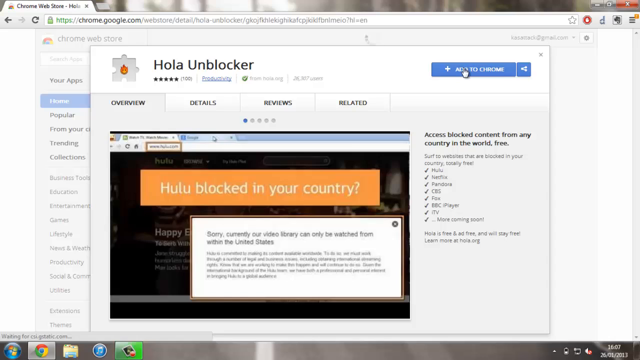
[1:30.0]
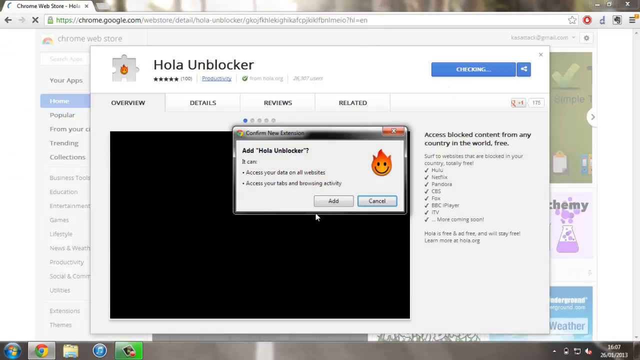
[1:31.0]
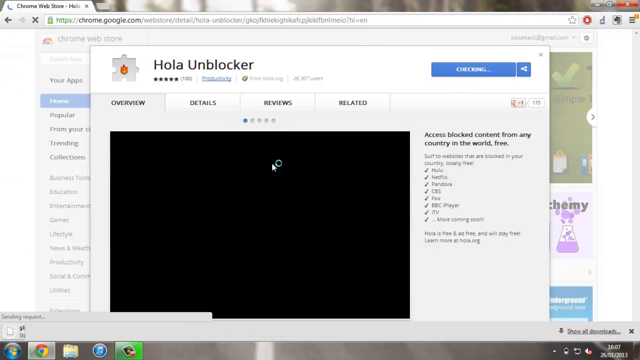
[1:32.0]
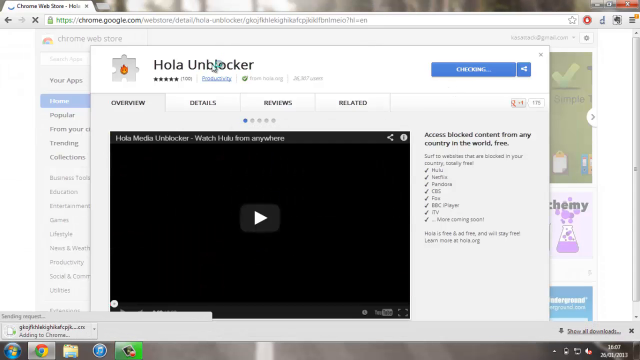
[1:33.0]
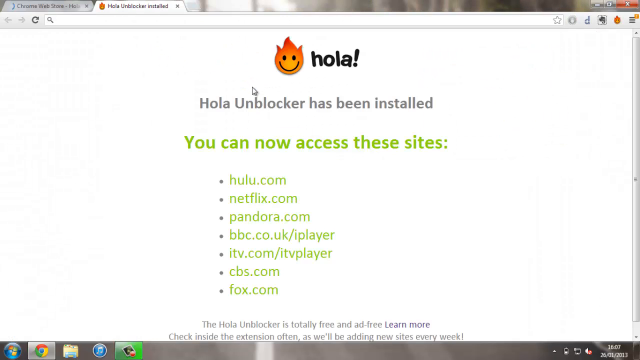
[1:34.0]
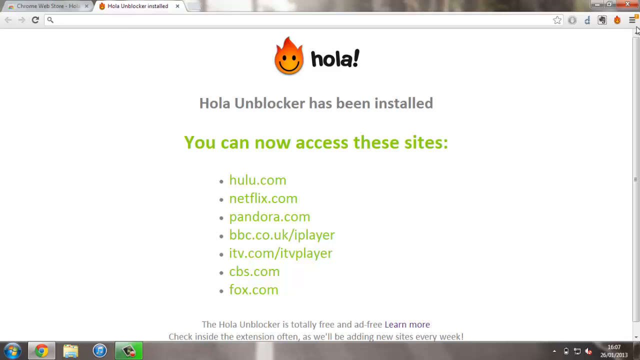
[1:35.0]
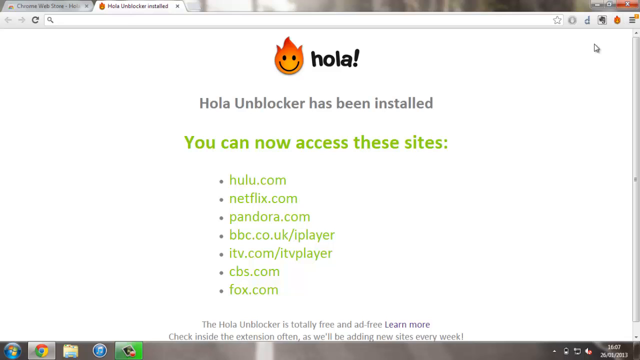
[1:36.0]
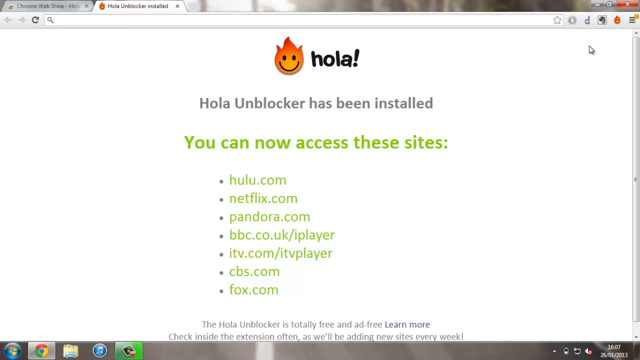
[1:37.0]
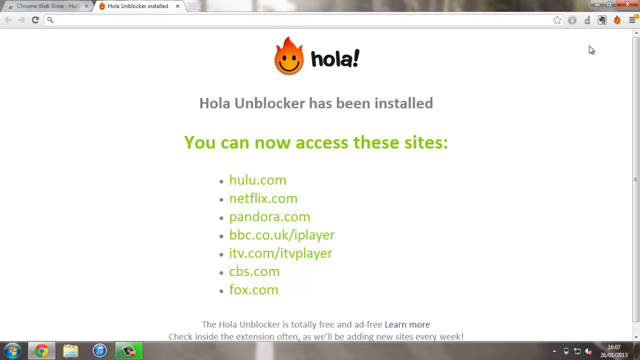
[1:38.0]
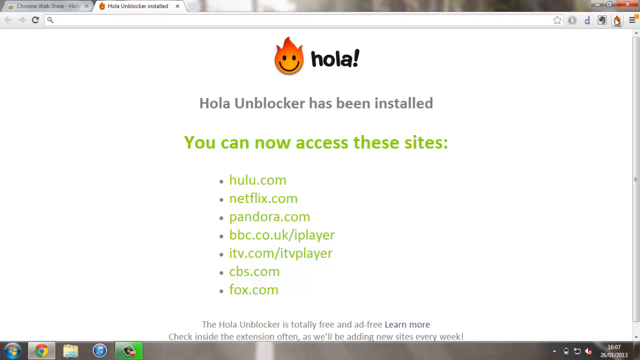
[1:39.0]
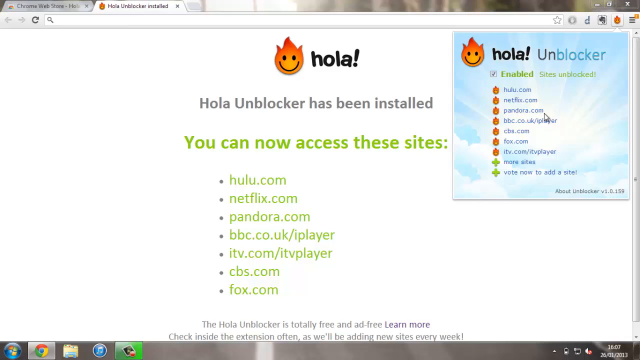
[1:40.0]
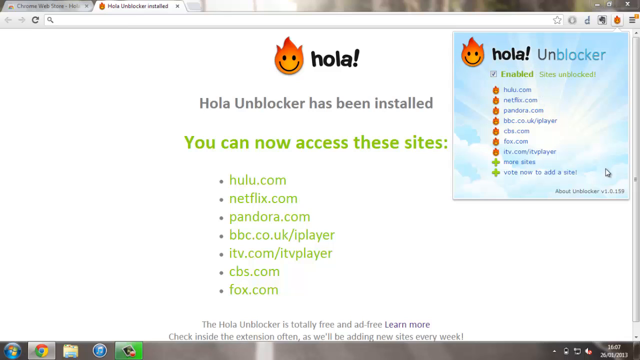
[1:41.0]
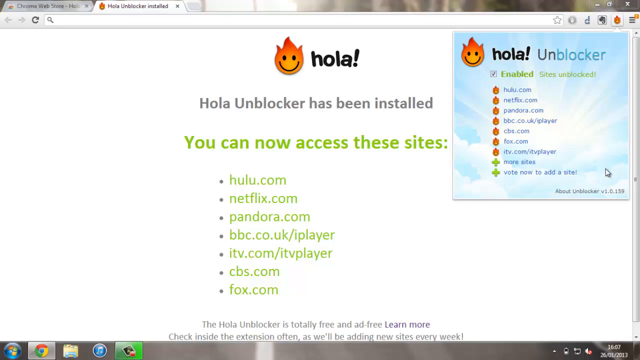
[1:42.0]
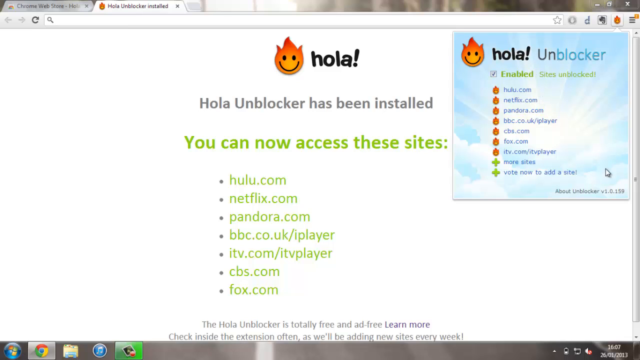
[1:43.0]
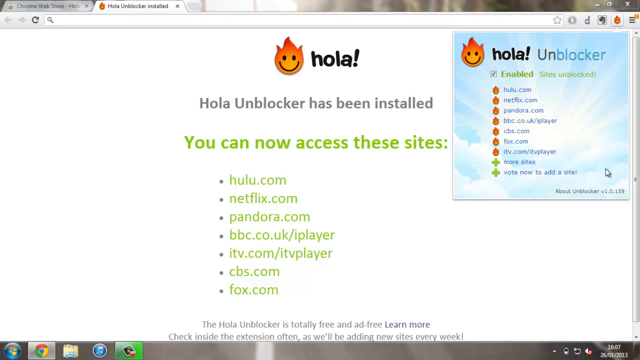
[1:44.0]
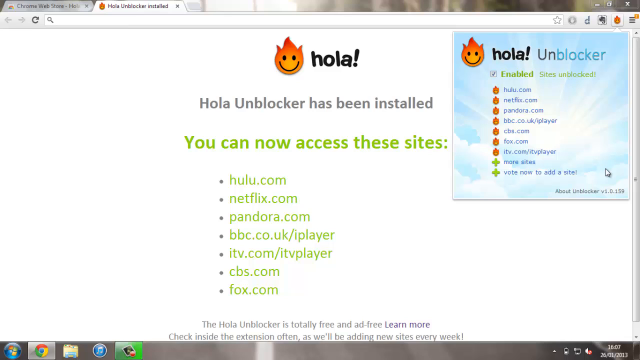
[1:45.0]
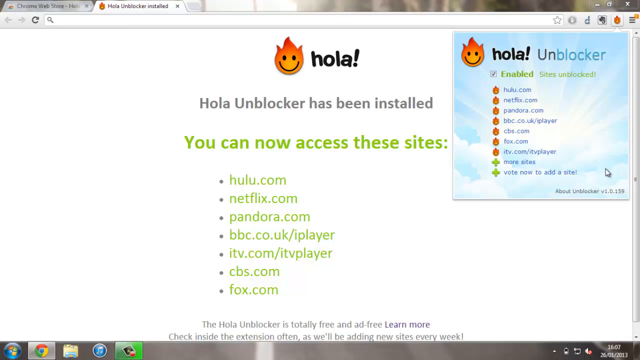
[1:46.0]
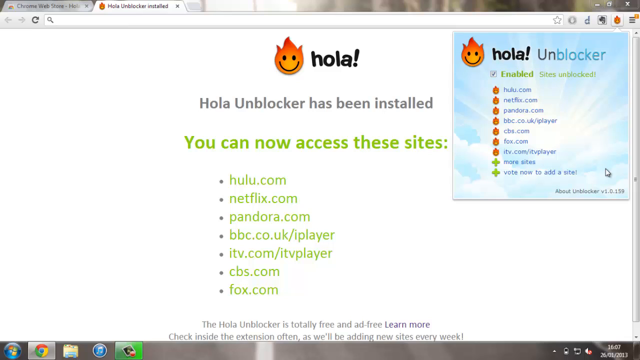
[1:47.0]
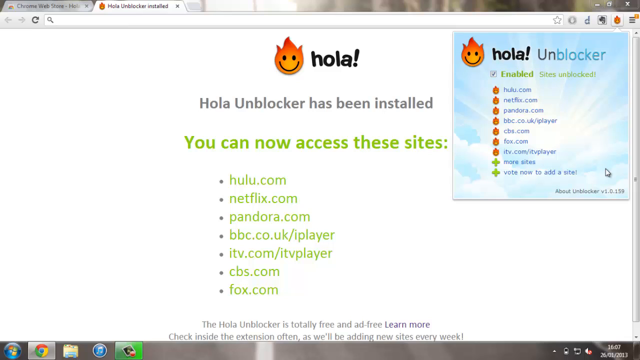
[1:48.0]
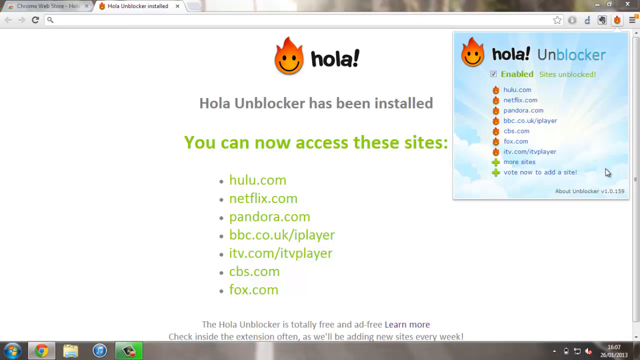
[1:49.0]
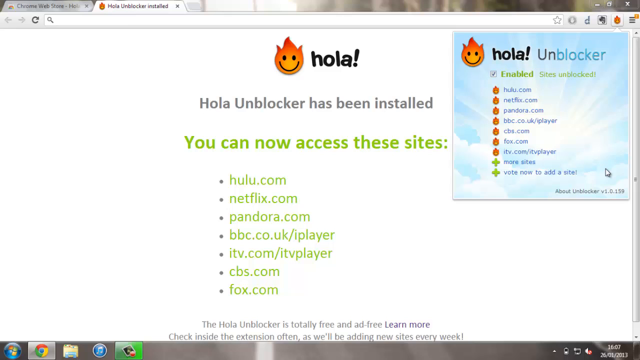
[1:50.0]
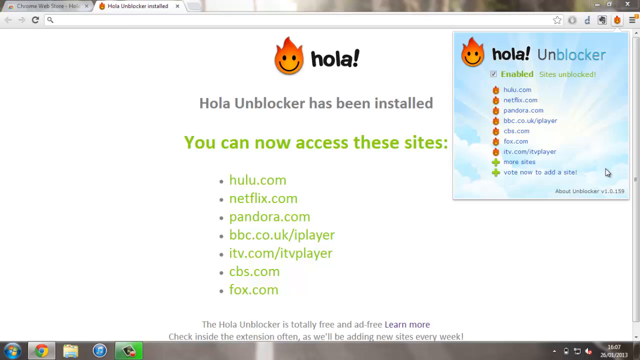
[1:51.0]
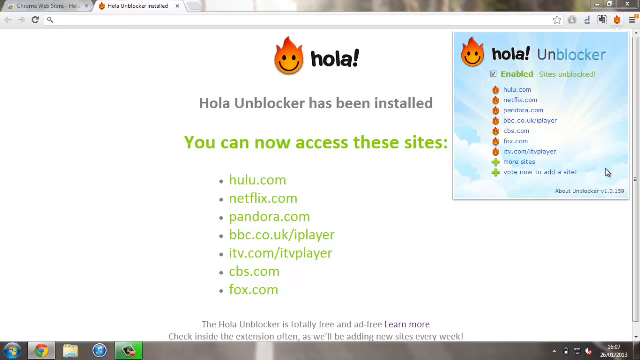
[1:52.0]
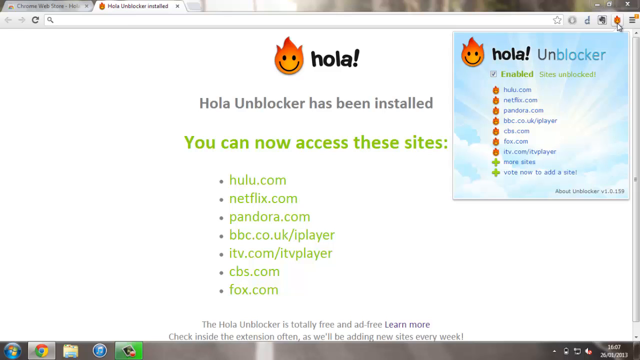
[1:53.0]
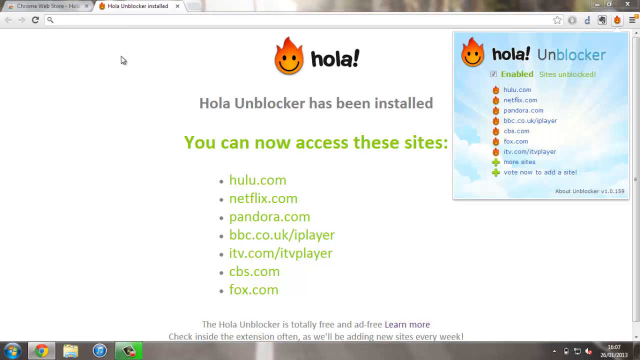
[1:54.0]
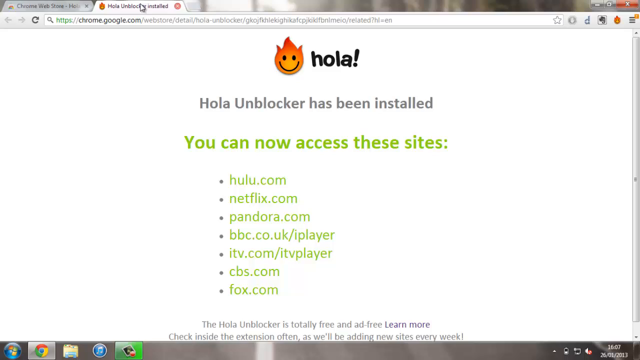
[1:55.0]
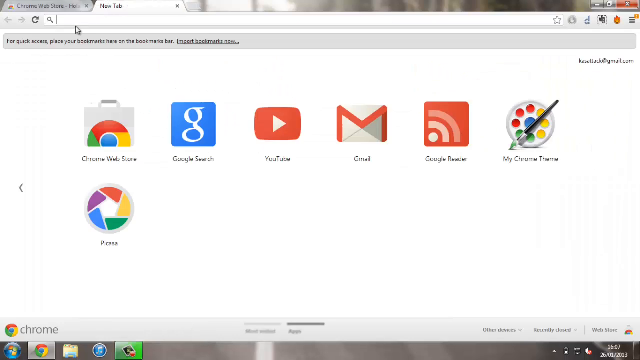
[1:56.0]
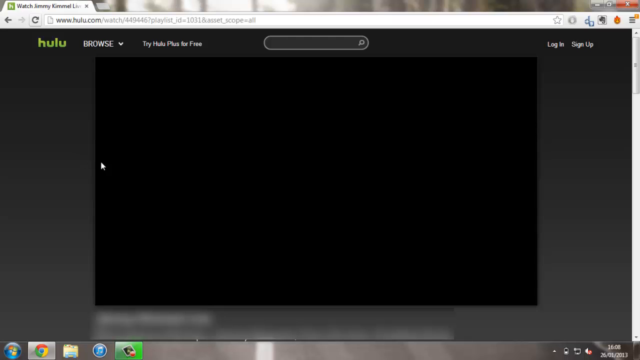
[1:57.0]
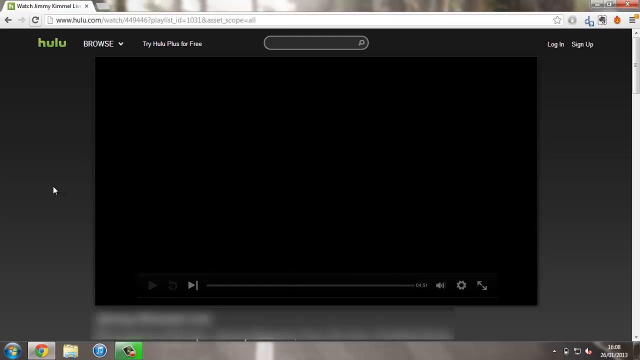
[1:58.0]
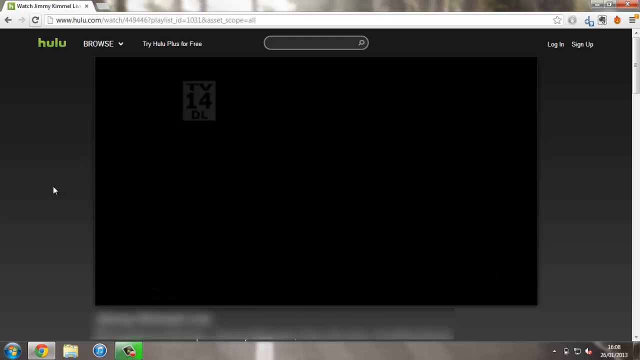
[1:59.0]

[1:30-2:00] After the Add to Chrome click, a pop-up appears asking to add Hola Unblocker and saying "It can access your data on all websites, access your tabs and browsing activity". The user clicks Add without hesitating. It quickly loads, something pops up in the top right, and a new tab opens saying "Hola Unblocker has been installed. You can now access these sites", listing hulu.com, netflix.com, pandora.com, bbc.co.uk iPlayer, itv.com iPlayer, cbs.com and fox.com. The user clicks the Hola icon in the top right, bringing up another pop-up titled "Hola Unblocker", with a check mark in a box next to the word "enabled" and a list of unblocked sites: Netflix, Pandora, BBC, CBS, Fox, ITV and "more sites", then "vote now to add a site". At the bottom right it says "About Unblocker v1.0.159". The cursor hovers there for a second, moves back up and clicks the icon again. The user closes the tab that popped up, opens a new tab, and closes the Chrome Web Store tab, which returns them to the Jimmy Kimmel Live video. This time the video starts, fading in from a black screen, with "TV 14 DL" in the top left. The image is an old TV without signal showing old-style black and gray interference.